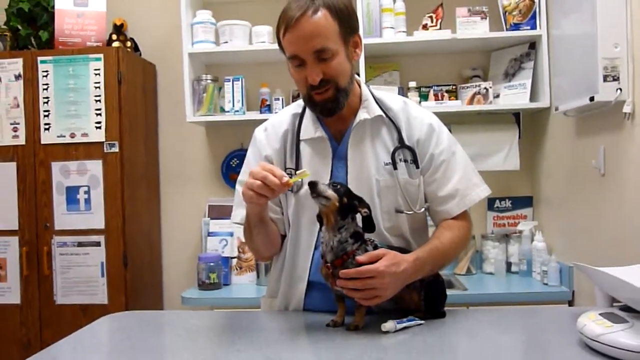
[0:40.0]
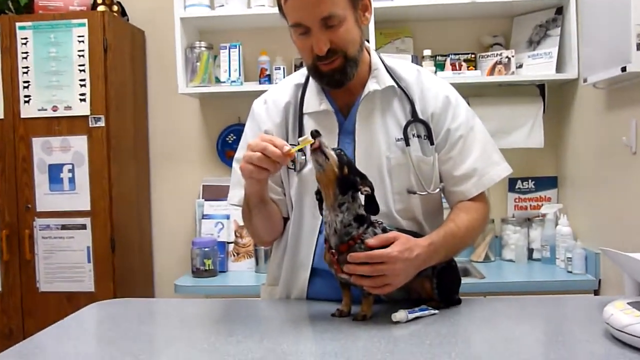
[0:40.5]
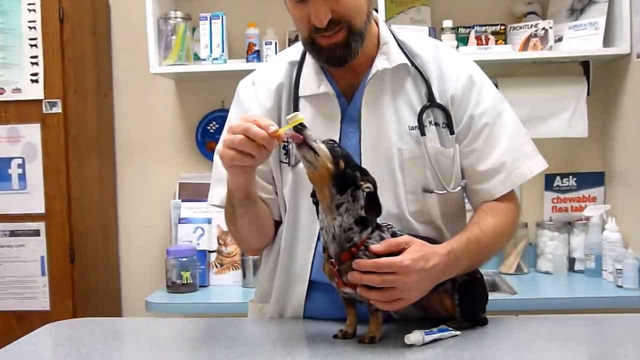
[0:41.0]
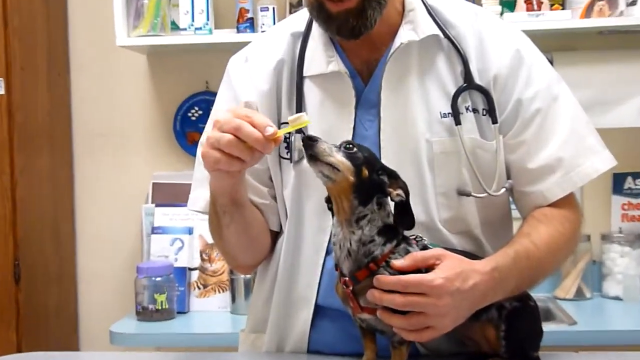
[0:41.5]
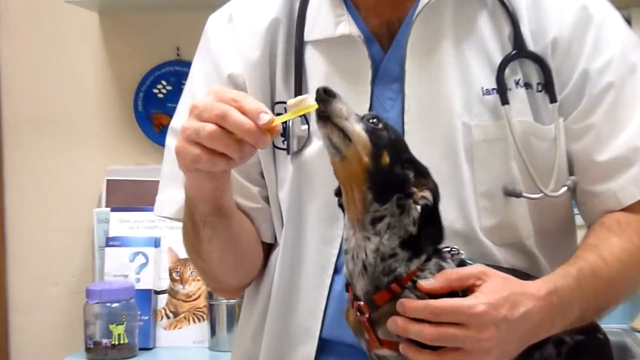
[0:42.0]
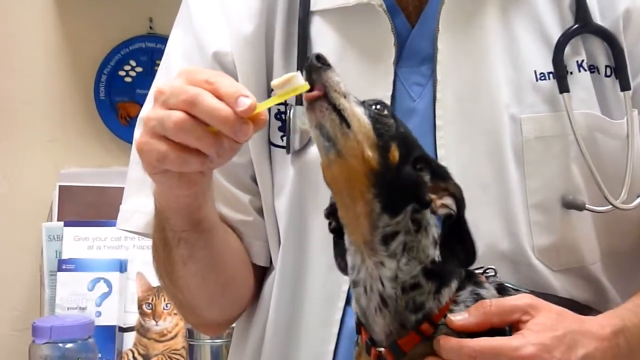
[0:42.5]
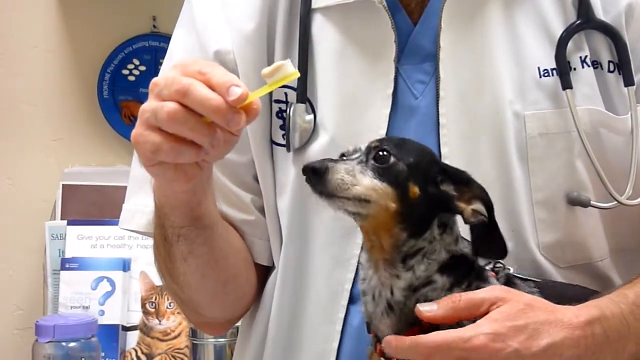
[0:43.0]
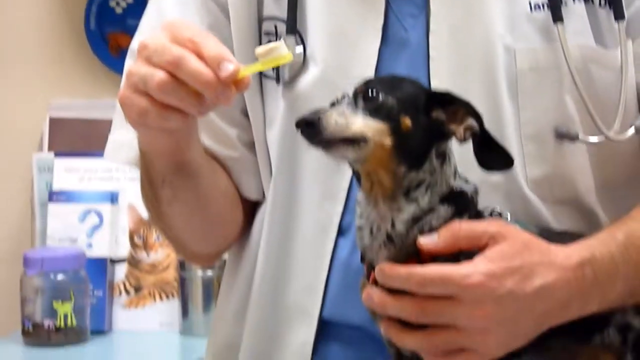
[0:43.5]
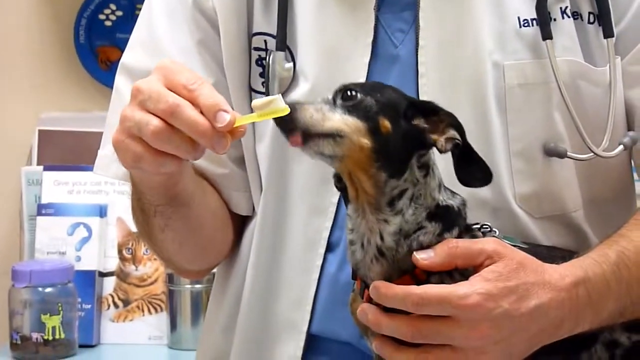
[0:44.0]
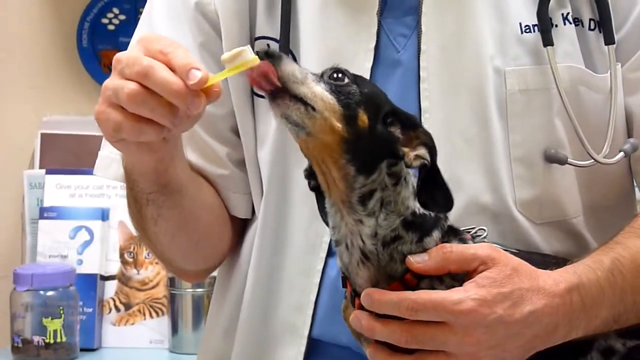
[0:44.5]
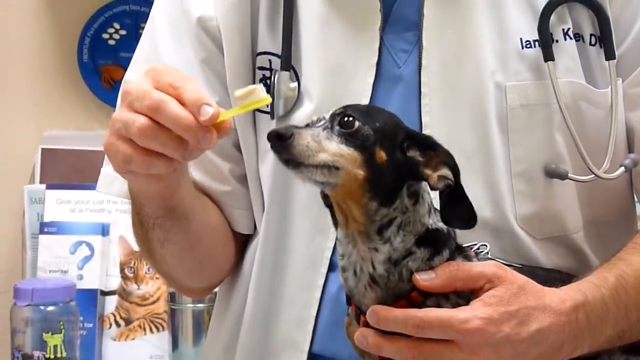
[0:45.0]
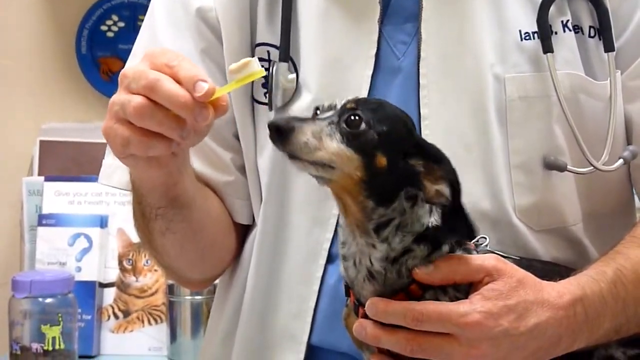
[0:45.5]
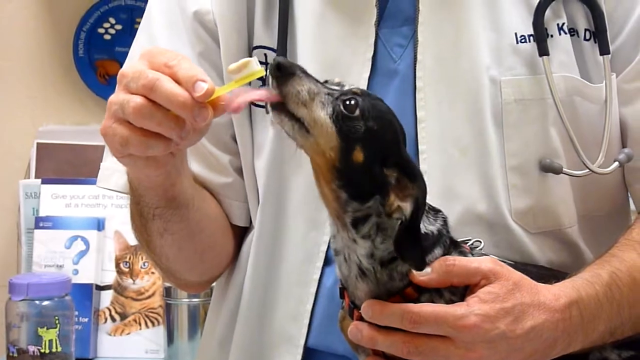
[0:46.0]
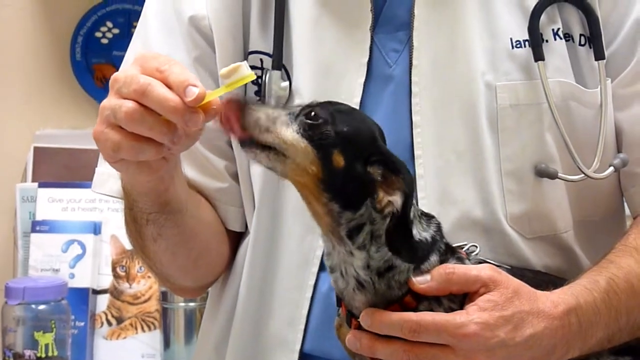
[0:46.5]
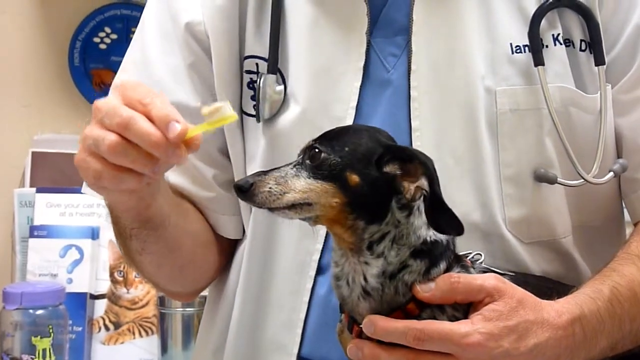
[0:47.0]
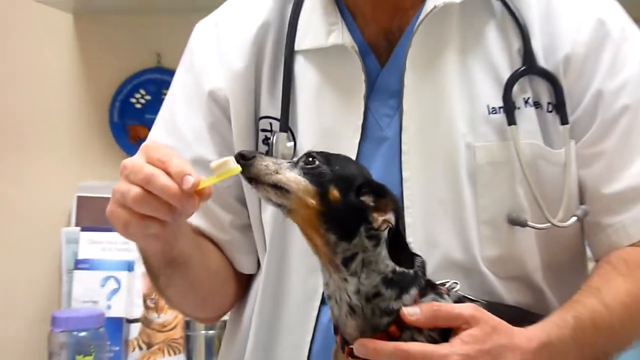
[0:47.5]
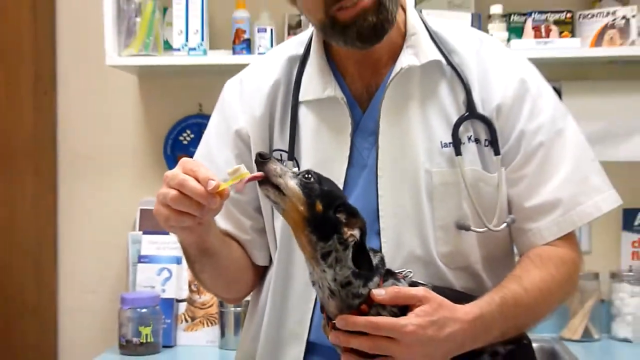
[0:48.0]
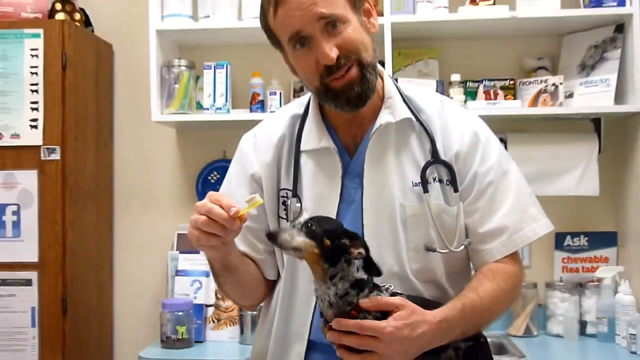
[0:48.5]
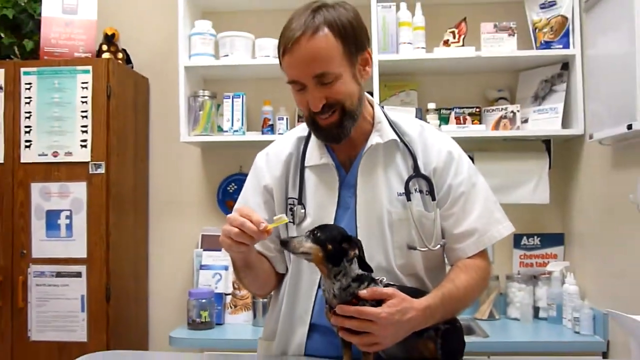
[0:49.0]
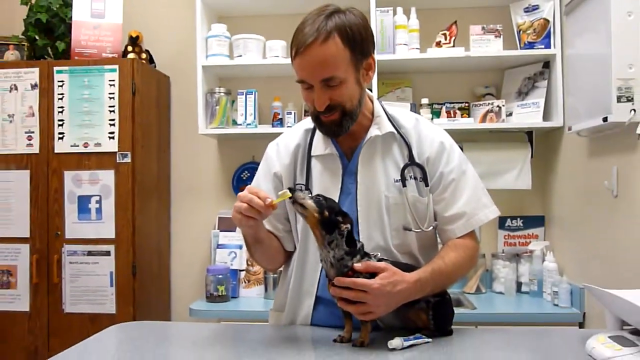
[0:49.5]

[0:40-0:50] The dog sniffs the toothbrush and then licks the bottom part of the yellow toothbrush quickly, where there may be some toothpaste. His ears are back and he stares at the toothbrush, appearing very happy. The camera pans in and out and zooms in on the dog's face, showing his dark black eyes, the brown fur around his black nose, and his very long ears. The doctor holds the dog with his left hand while teasing him with the toothpaste in his right hand.